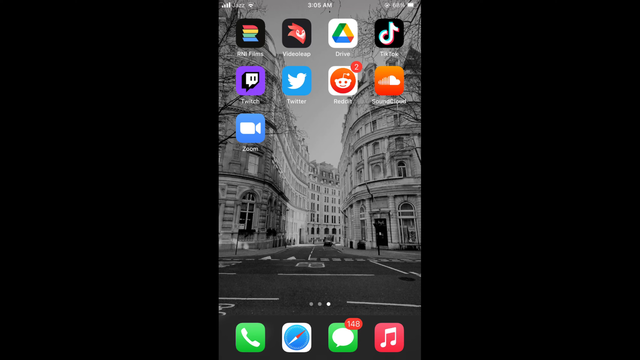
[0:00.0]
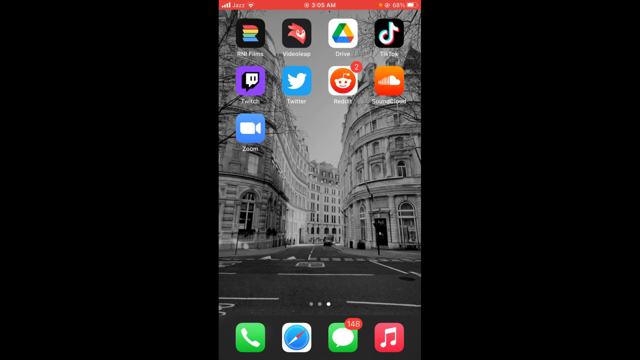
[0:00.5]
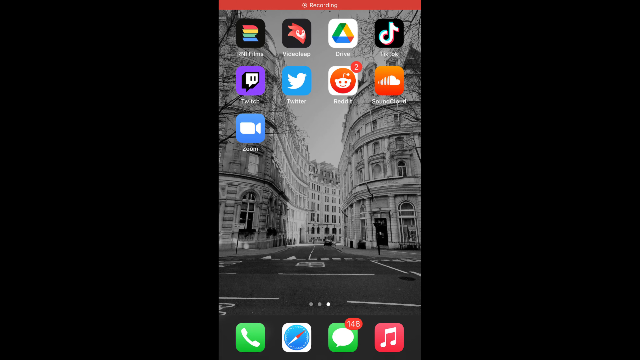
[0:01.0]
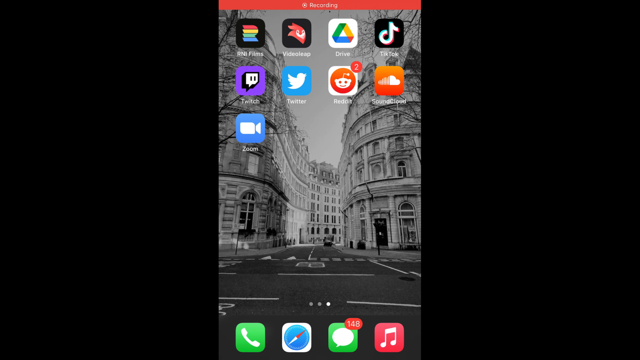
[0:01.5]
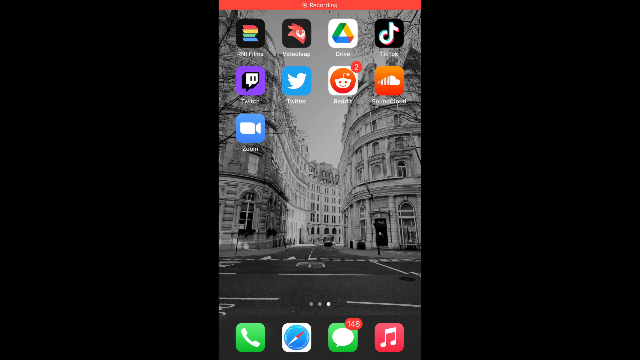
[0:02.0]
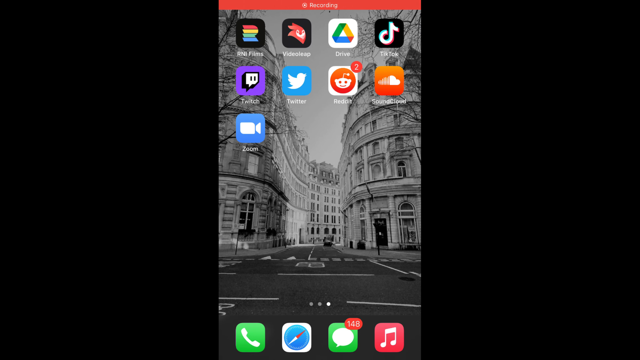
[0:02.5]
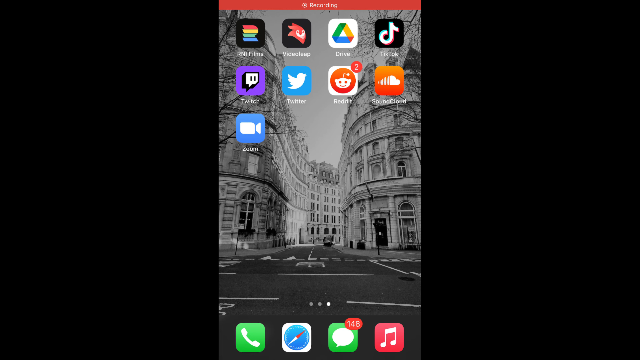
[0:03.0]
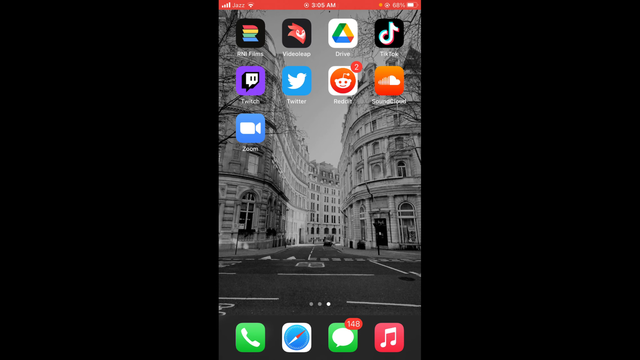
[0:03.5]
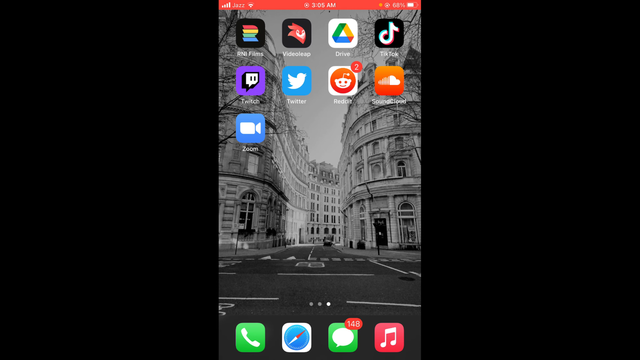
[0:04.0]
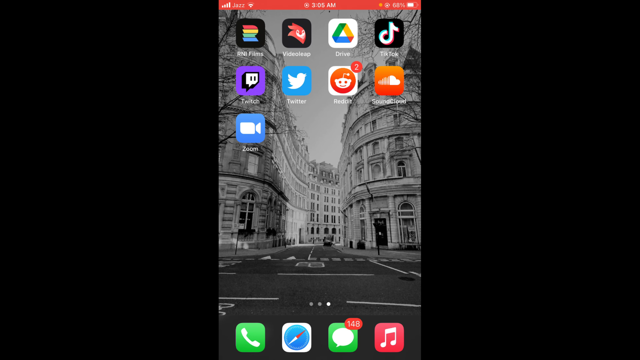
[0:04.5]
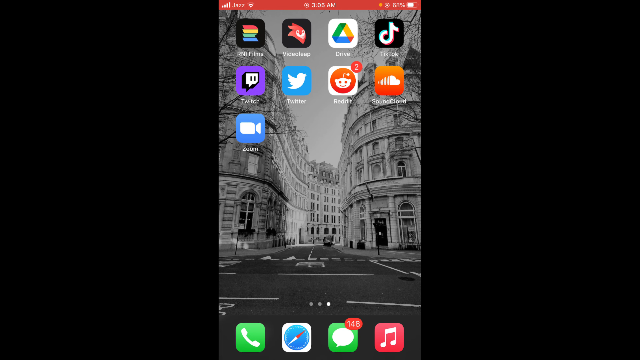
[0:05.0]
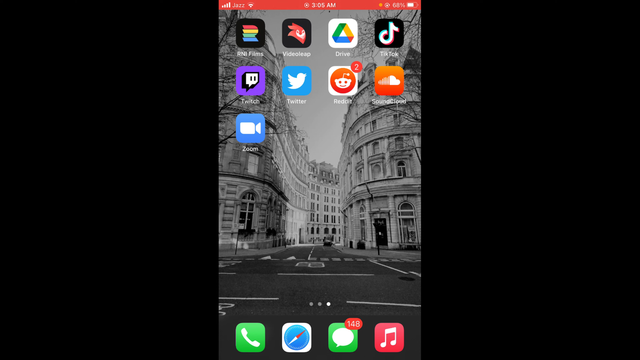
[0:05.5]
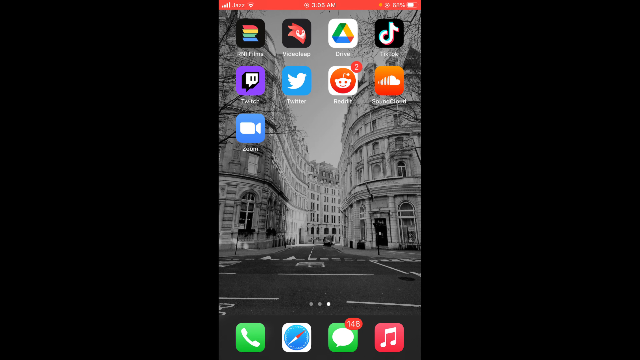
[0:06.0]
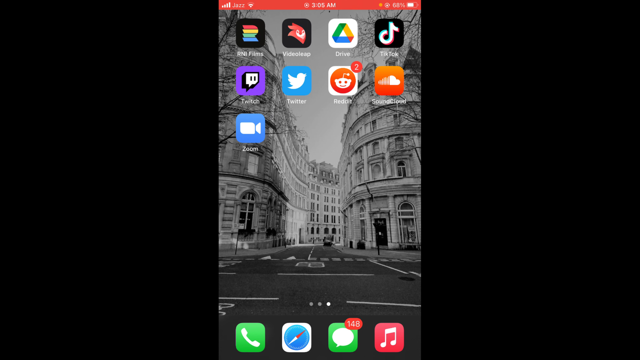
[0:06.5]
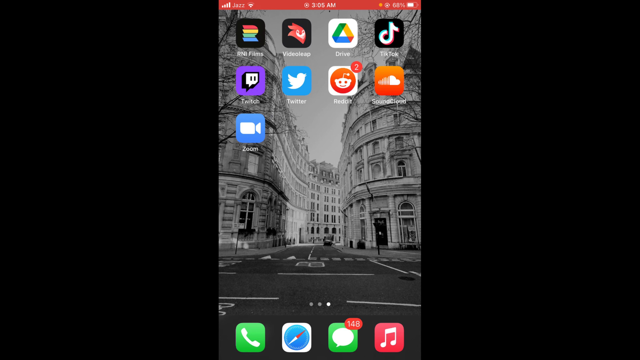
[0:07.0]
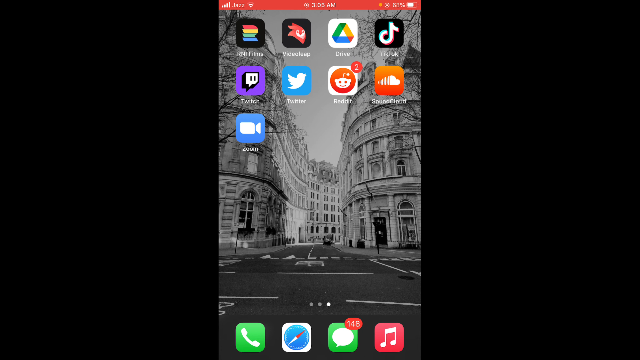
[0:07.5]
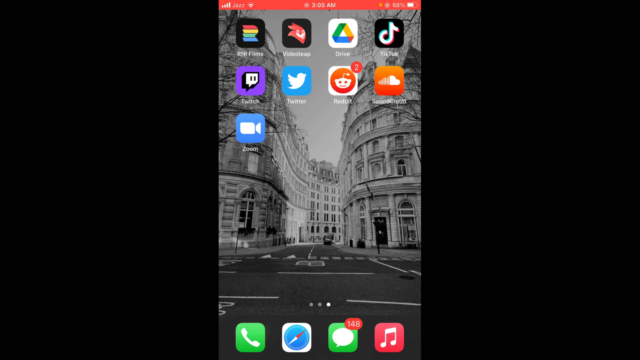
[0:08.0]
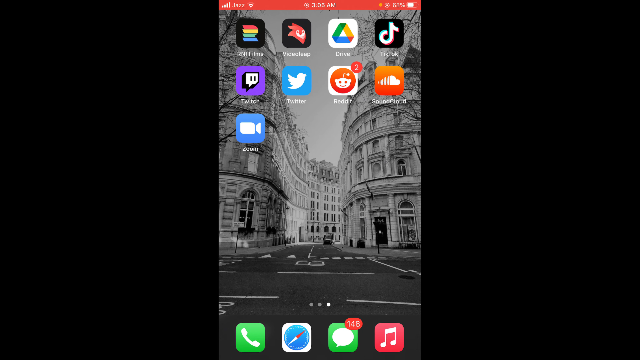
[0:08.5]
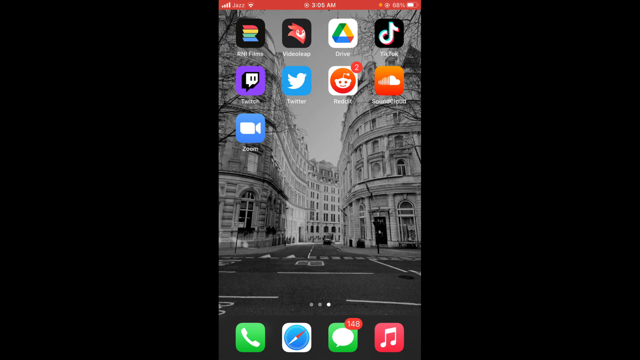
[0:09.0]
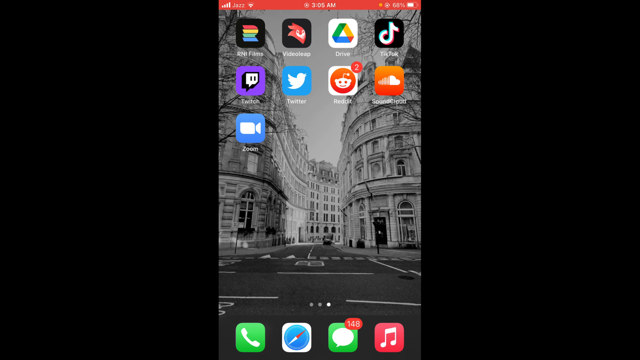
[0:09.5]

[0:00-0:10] An Android phone screen is displayed, with nine app icons grouped at the top of the screen. Among them are Reddit, Twitter, Twitch, Zoom and TikTok.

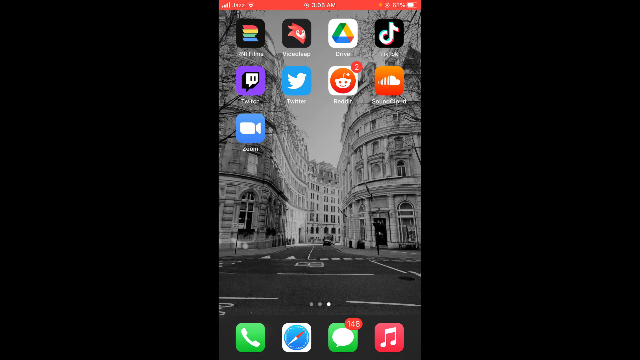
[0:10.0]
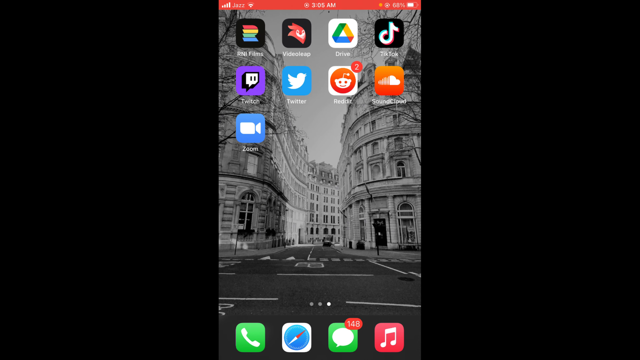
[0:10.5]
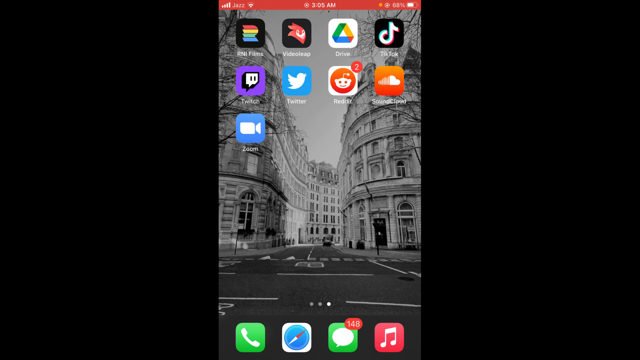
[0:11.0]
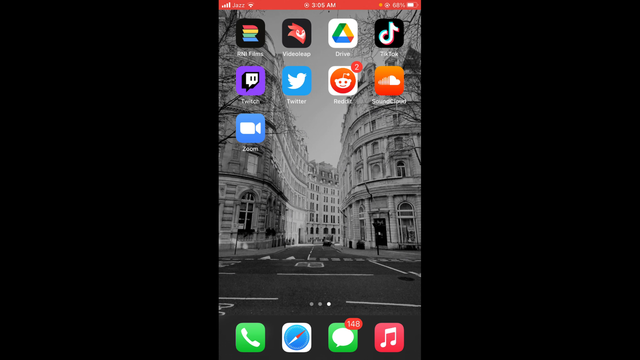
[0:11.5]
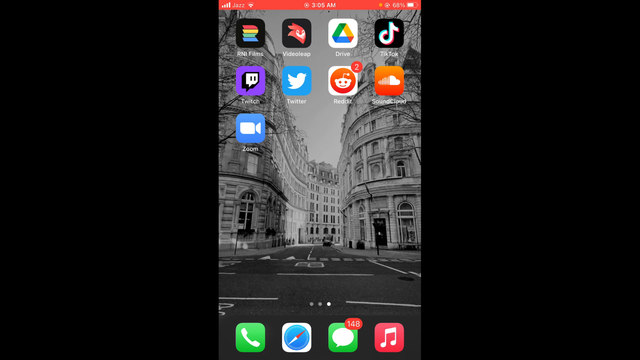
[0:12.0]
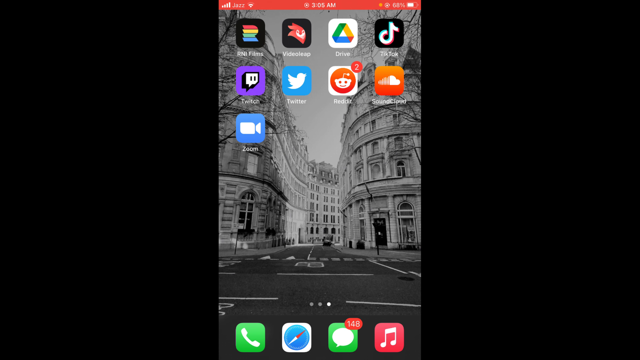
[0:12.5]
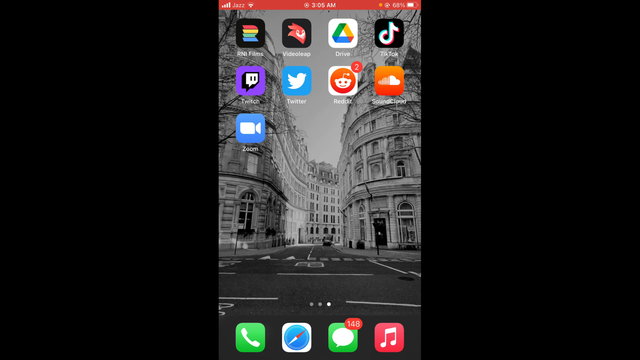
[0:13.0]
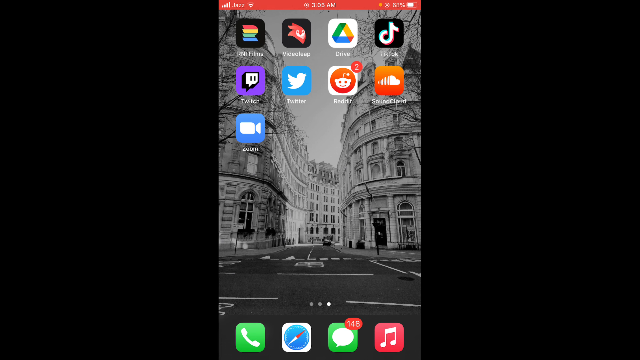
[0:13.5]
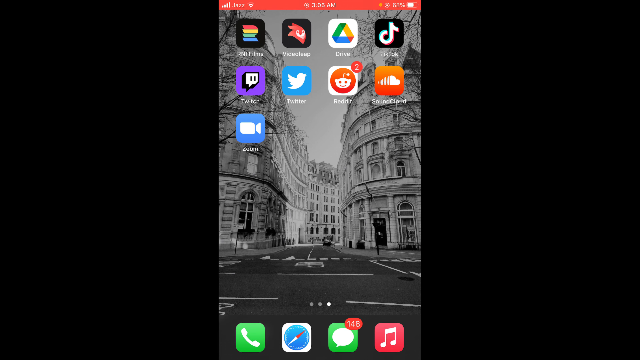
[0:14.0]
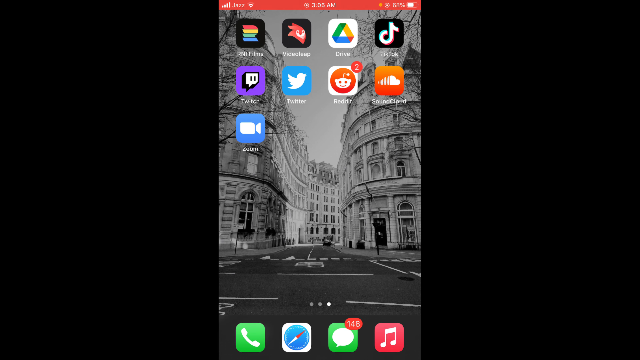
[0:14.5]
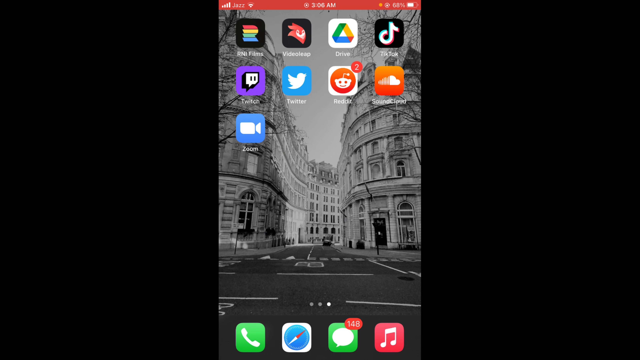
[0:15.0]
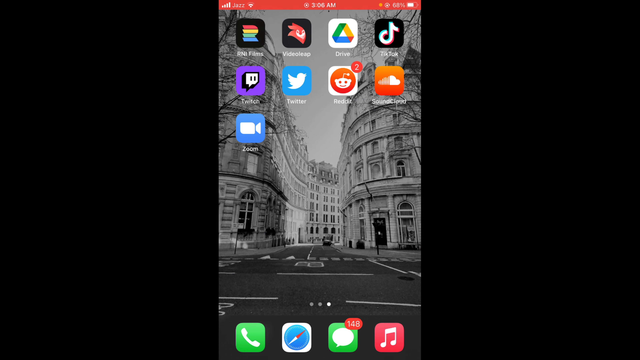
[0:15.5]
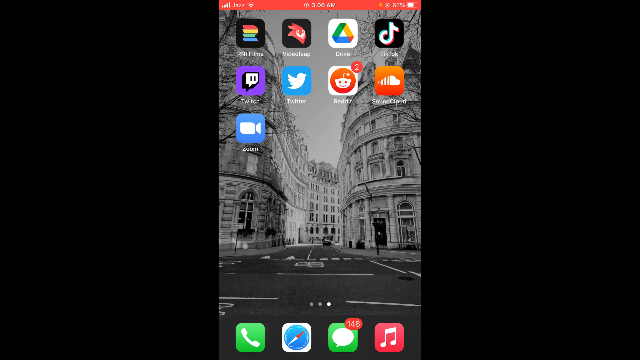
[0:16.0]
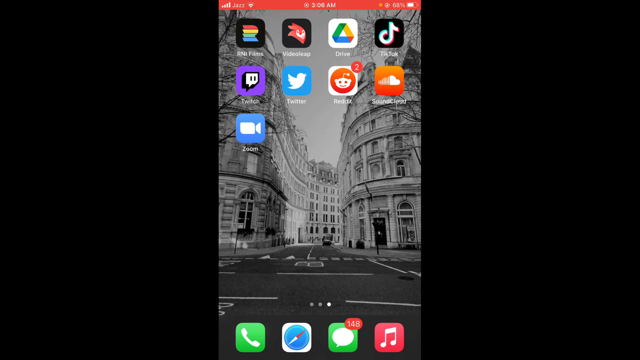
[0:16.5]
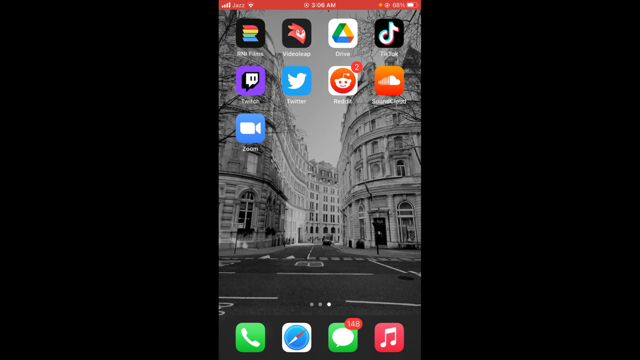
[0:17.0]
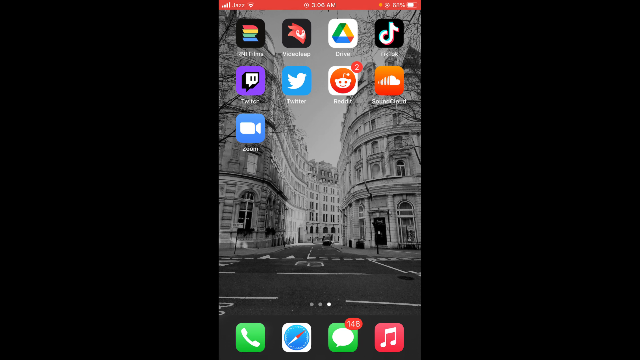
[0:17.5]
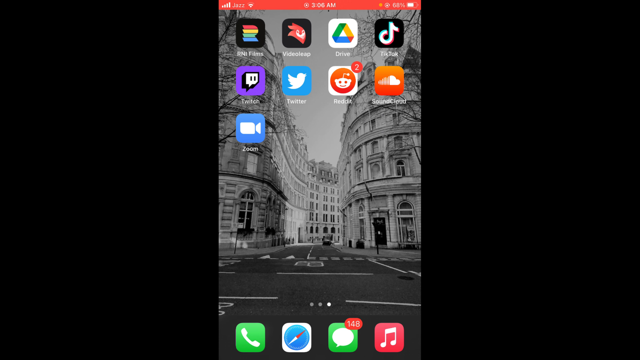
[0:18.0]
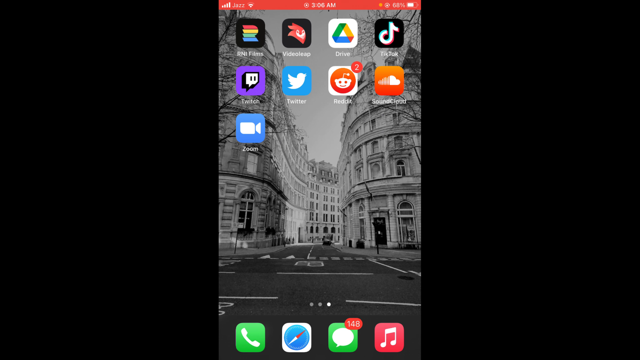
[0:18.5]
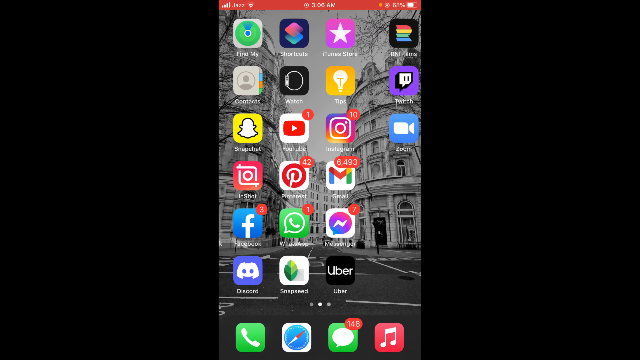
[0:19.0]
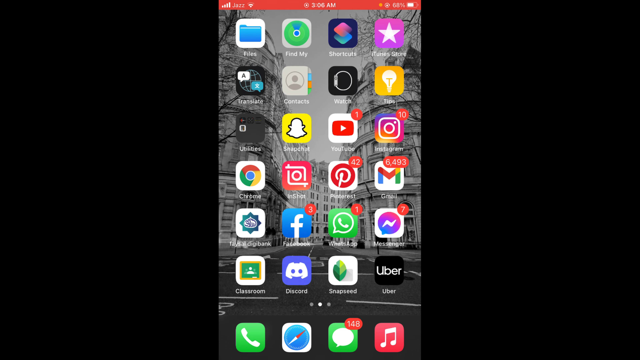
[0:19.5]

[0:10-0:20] The view scrolls to the left, revealing more app icons on the phone's home screen: Snapchat, Instagram, shortcuts, WhatsApp, Messenger, Discord, Facebook, Snapseed, Gmail, Pinterest and Translate. Uber is in the corner.